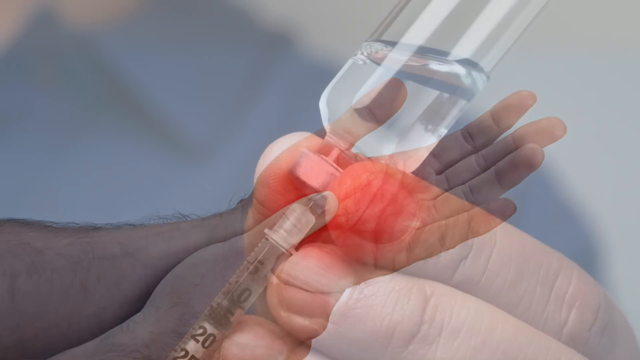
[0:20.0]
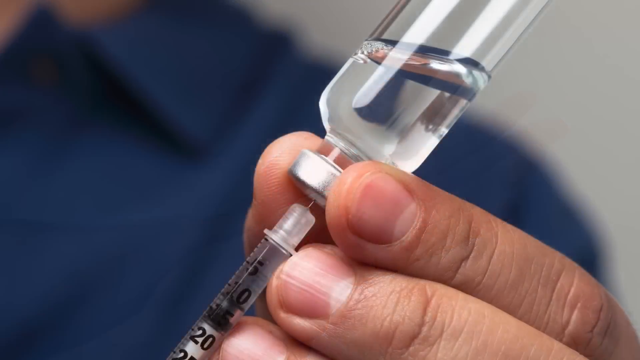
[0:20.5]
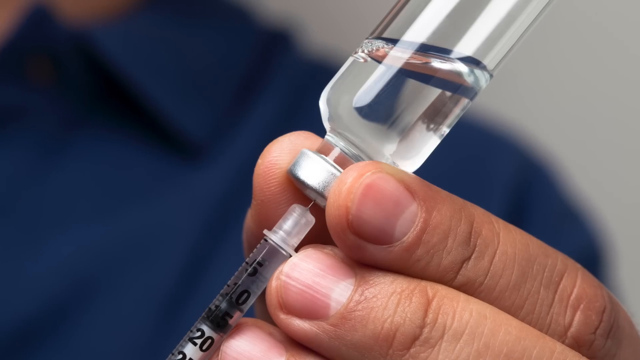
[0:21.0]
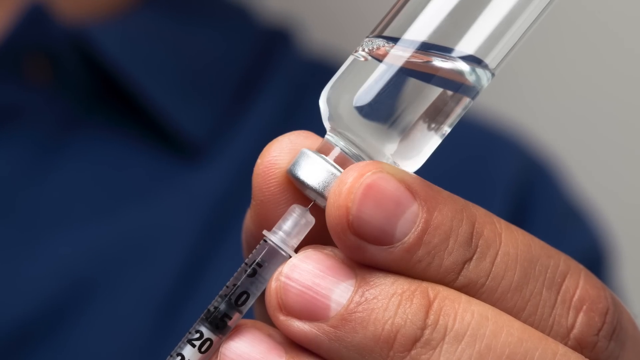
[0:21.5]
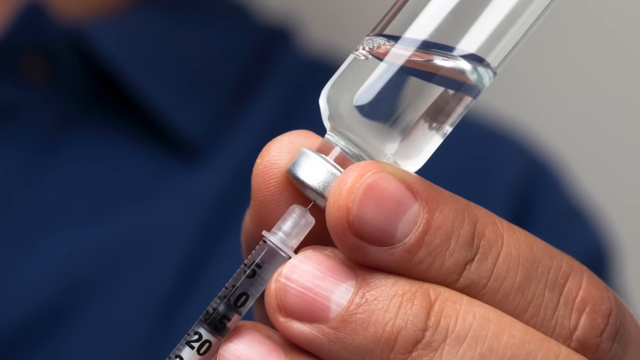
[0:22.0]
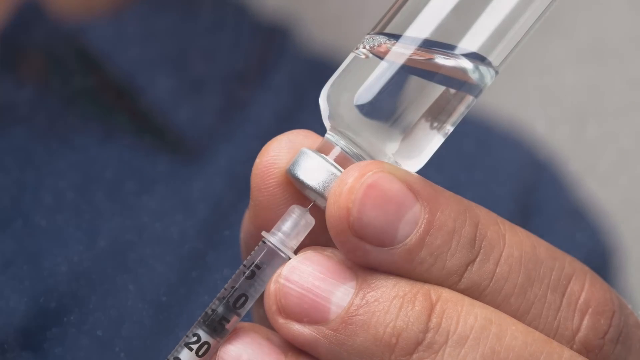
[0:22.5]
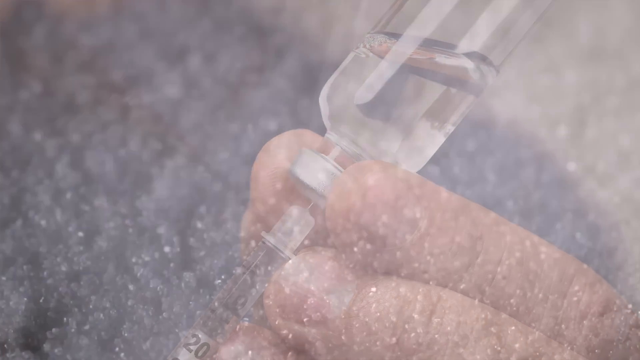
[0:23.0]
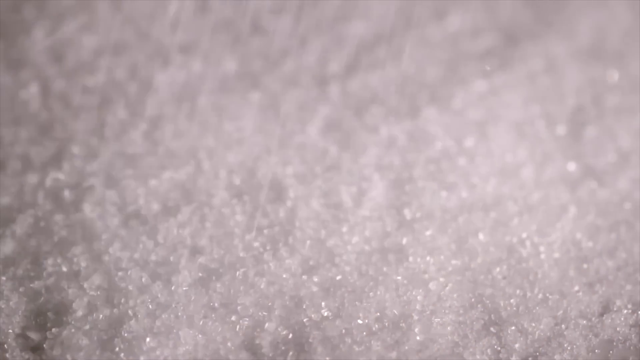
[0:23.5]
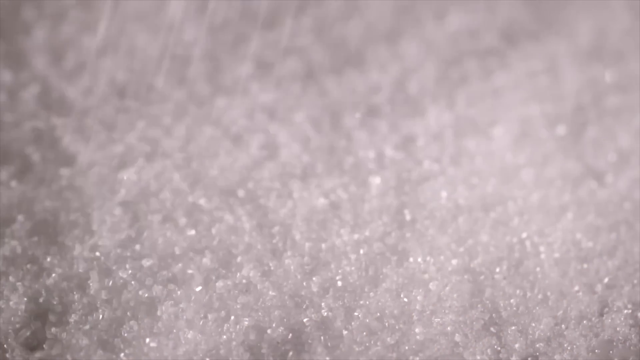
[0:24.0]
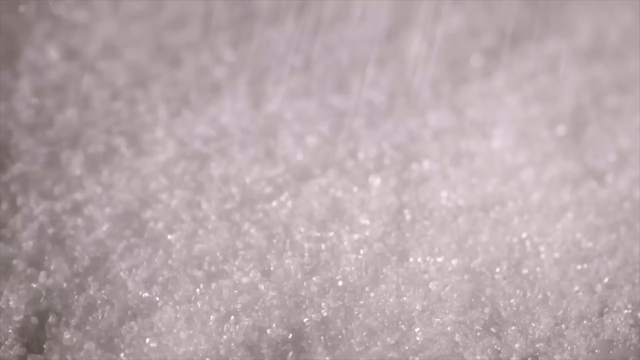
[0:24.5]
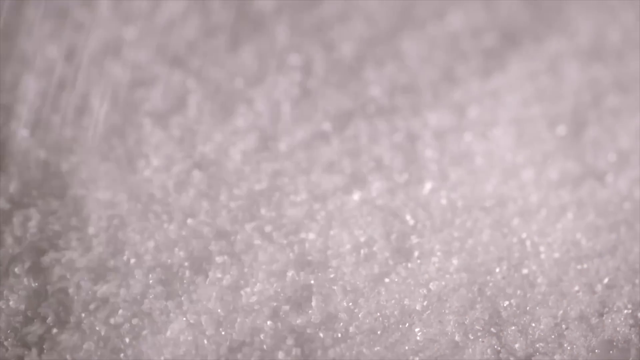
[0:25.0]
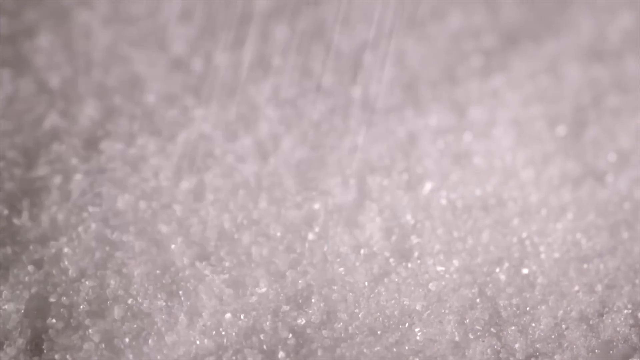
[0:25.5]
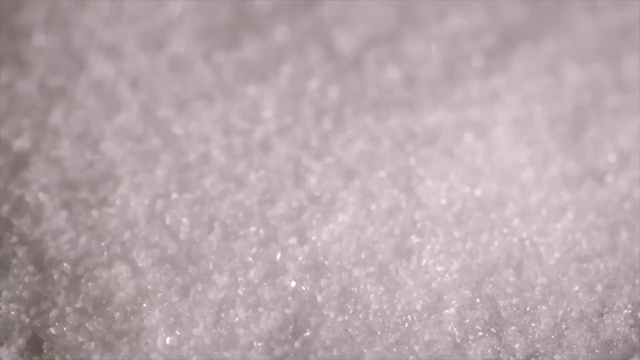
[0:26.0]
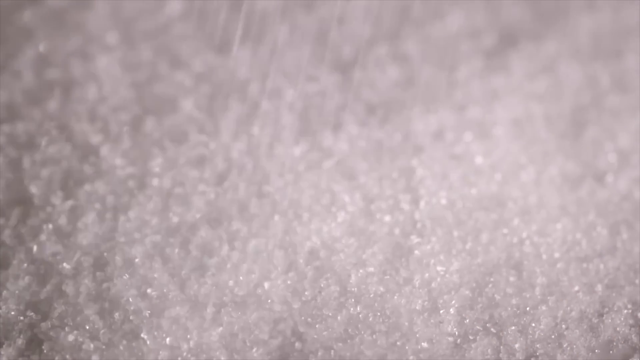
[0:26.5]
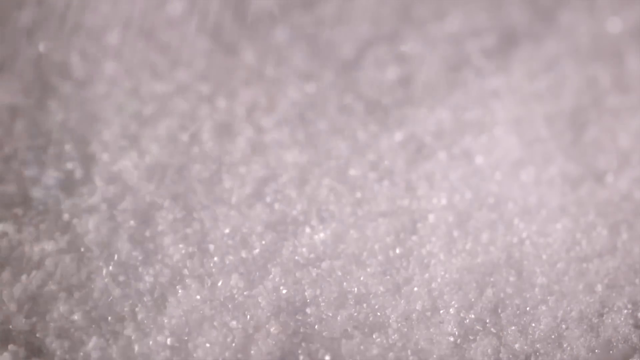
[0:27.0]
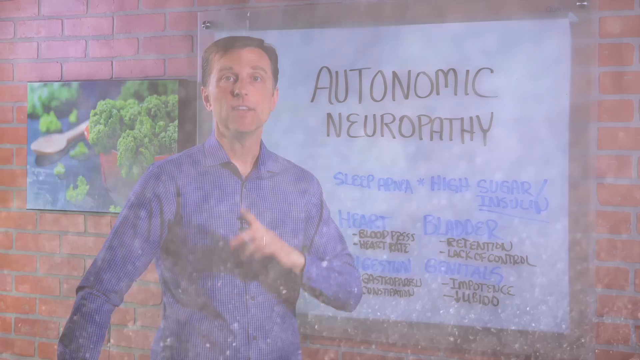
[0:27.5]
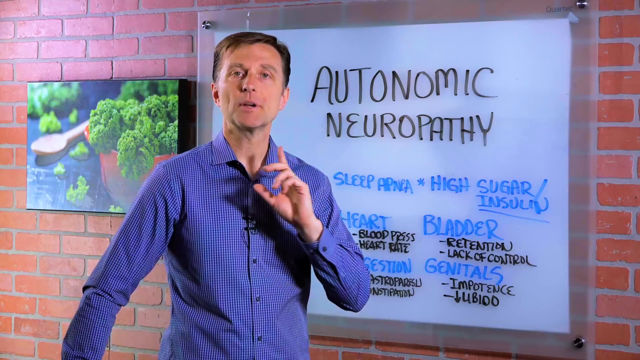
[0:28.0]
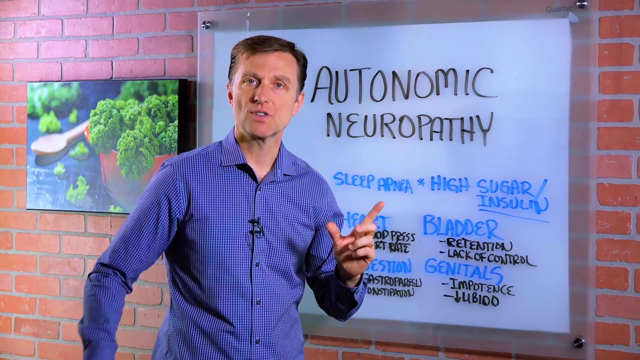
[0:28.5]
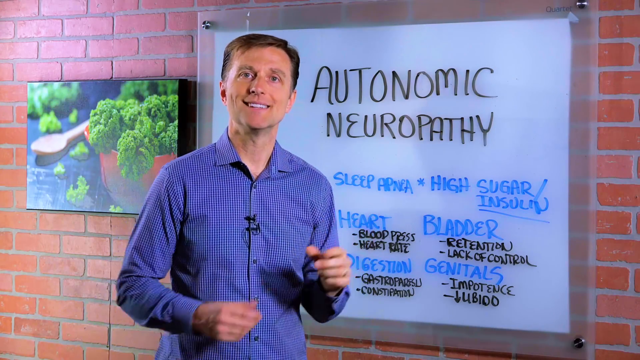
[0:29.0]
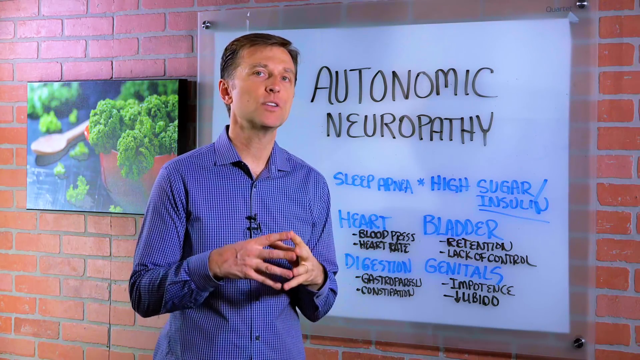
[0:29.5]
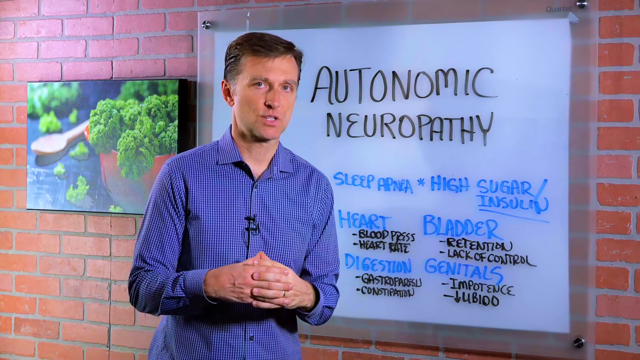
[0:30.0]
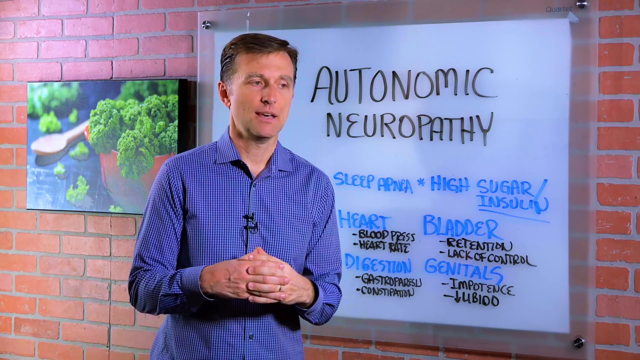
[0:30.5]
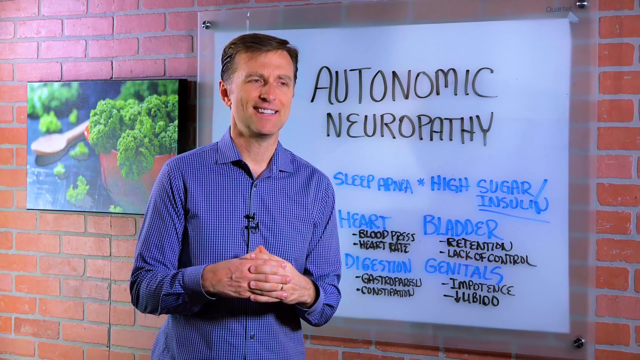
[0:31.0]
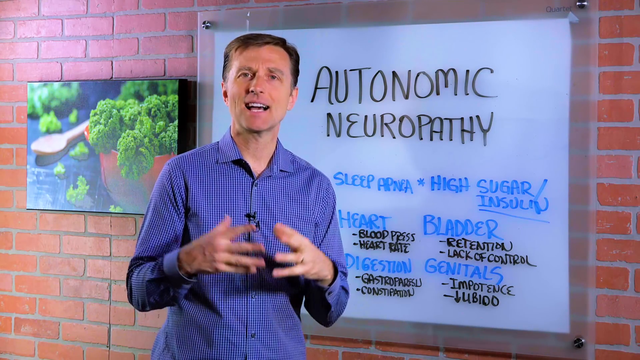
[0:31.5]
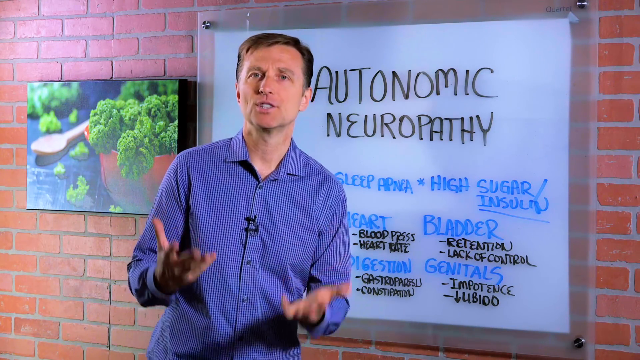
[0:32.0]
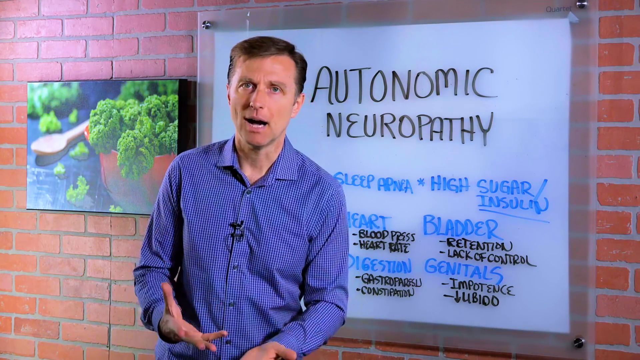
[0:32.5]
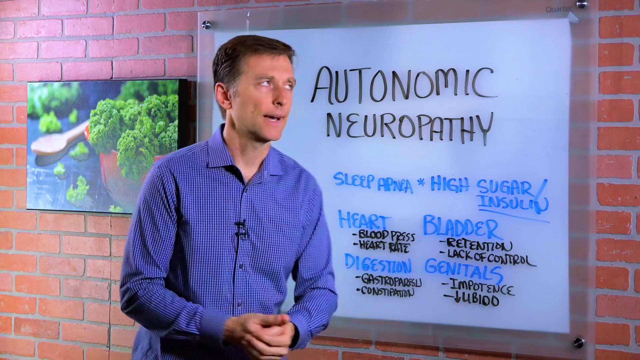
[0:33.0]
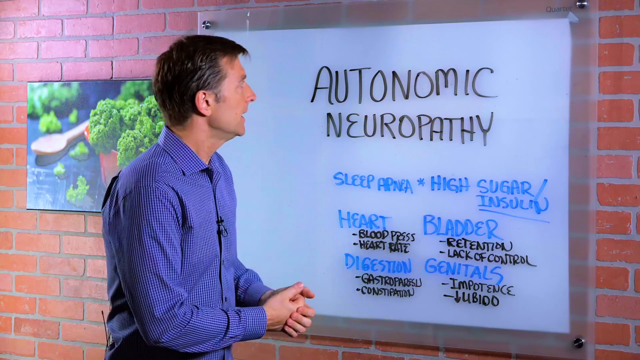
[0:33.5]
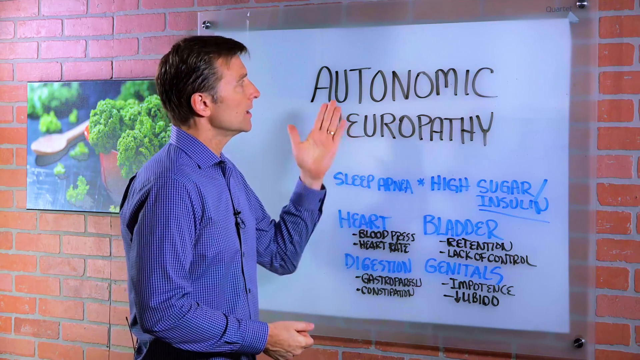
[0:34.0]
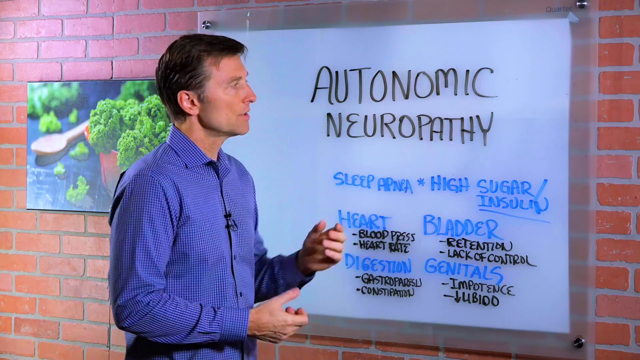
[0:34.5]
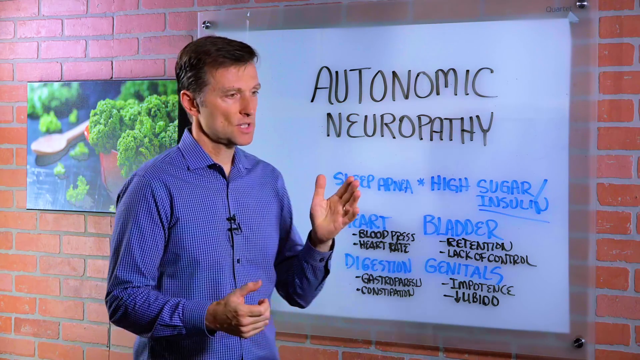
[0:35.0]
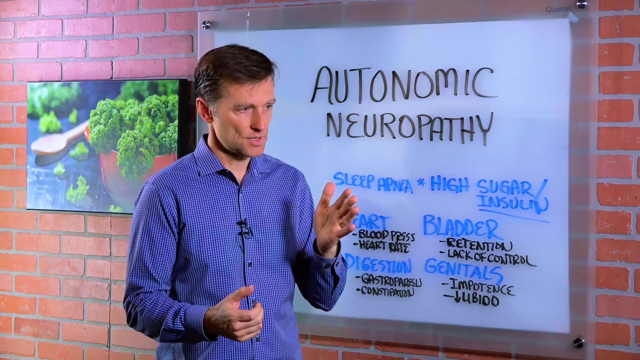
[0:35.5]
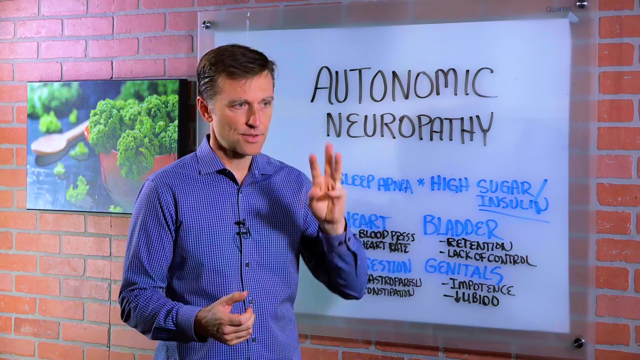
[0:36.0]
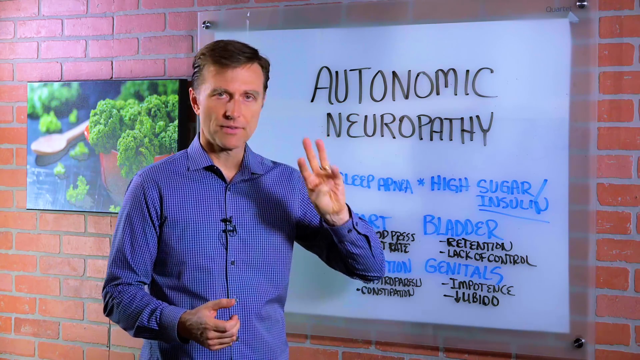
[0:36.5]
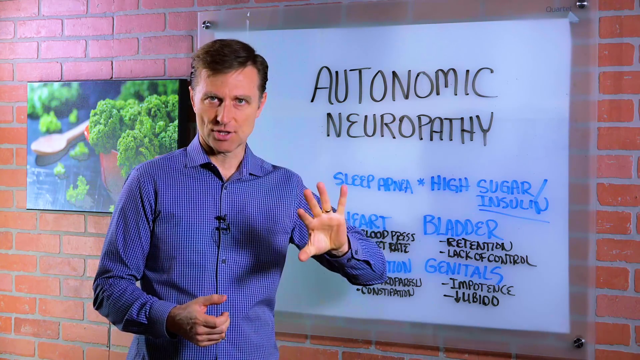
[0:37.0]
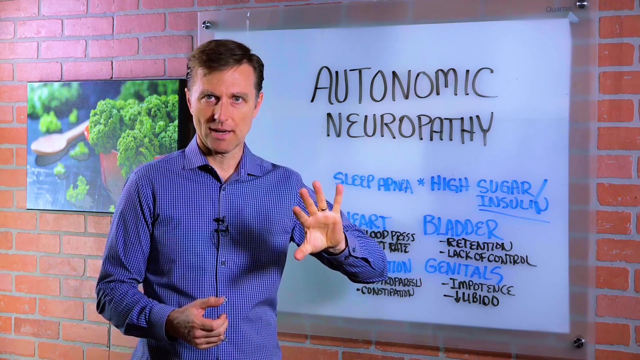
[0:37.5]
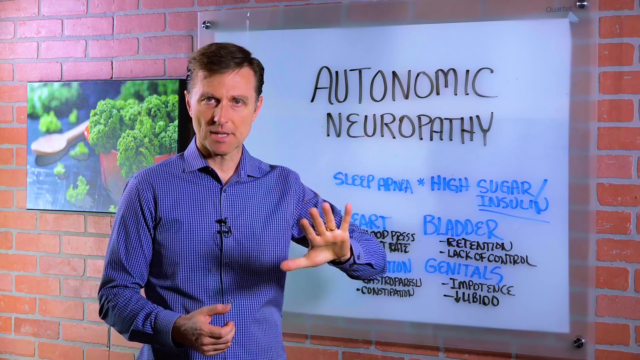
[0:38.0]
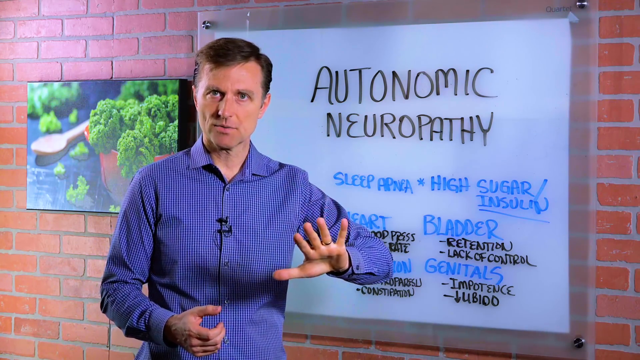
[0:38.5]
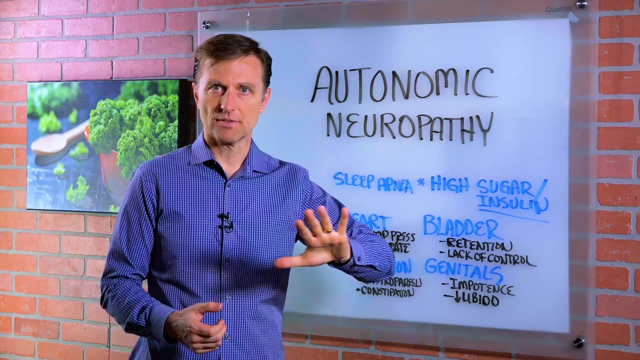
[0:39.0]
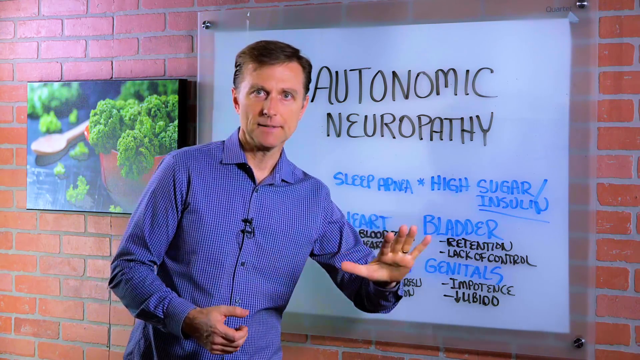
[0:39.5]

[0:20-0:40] The palm of a hand is shown facing upward, which looks like it is emphasizing pain. Next, what appears to be Dr. Mandel holds a vial of clear liquid with a silver top. A needle is inside the vial, and the needle is attached to a syringe. He seems to be holding it in his left hand, with his forefinger, middle finger and thumb pursed around the silver top of the vial. The numbers on the syringe are visible, including the 5 and 10 marked areas. Then very small, white, grainy objects appear, white and glistening, possibly salt or sand. The video returns to Dr. Mandel, who is still speaking to his audience with both arms bent at the elbow and his hands clasped together, fingers interlocking. This is followed by what appears to be a white object made up of very small, white, glistening grainy particles.